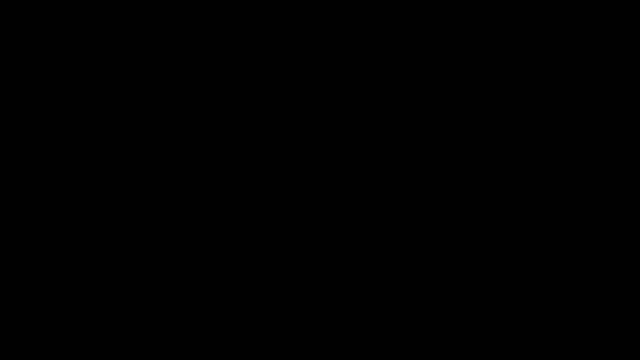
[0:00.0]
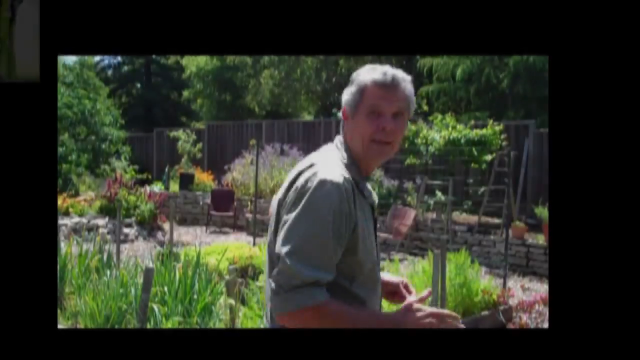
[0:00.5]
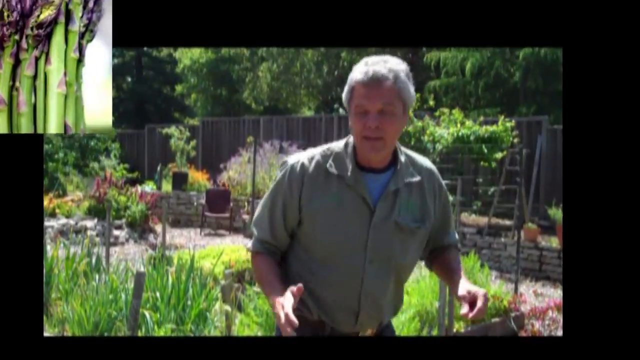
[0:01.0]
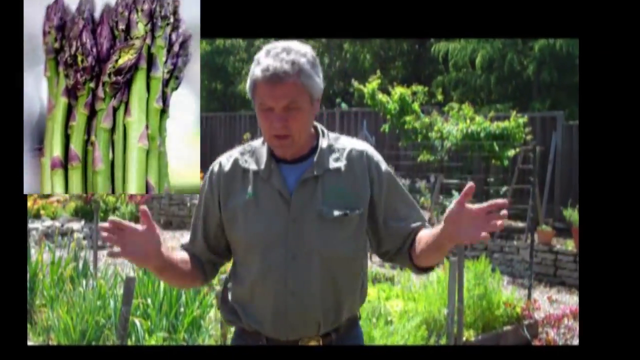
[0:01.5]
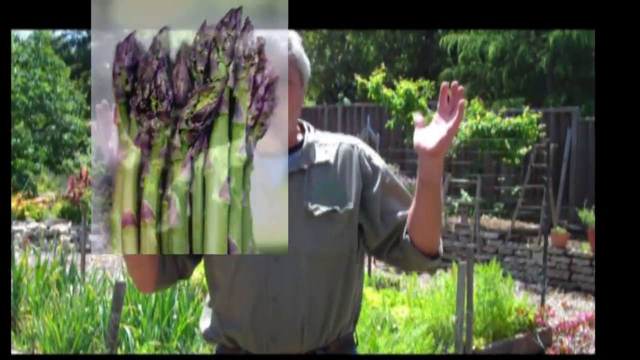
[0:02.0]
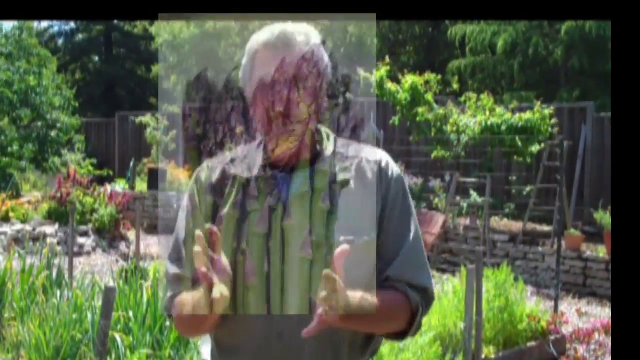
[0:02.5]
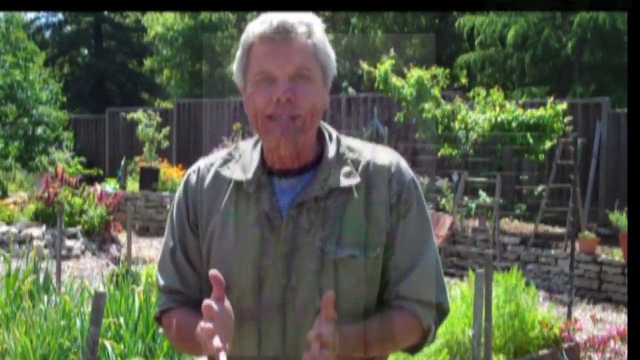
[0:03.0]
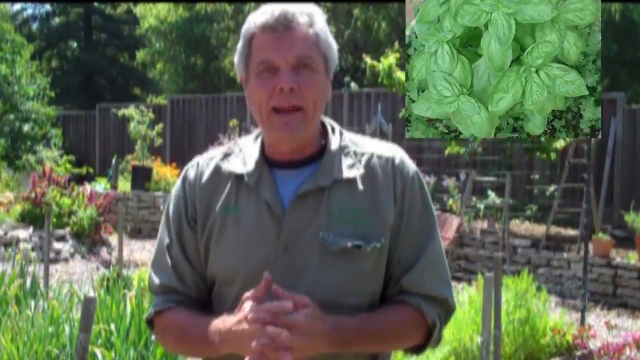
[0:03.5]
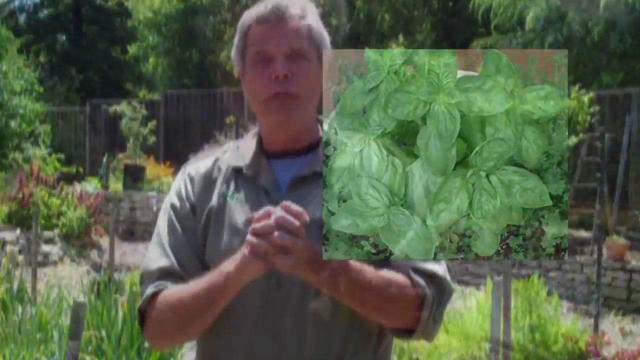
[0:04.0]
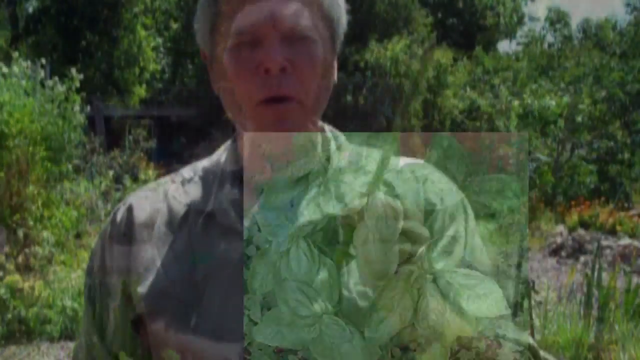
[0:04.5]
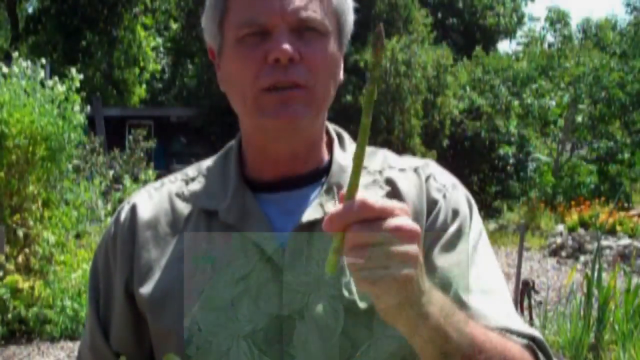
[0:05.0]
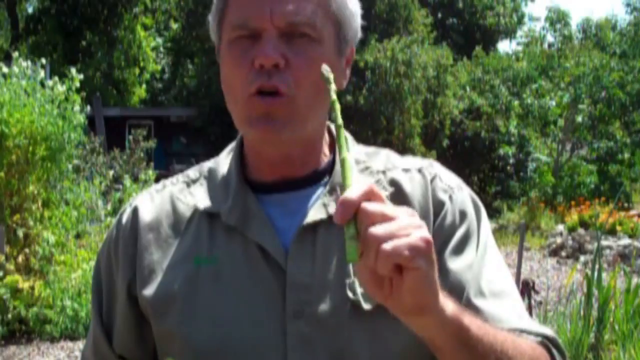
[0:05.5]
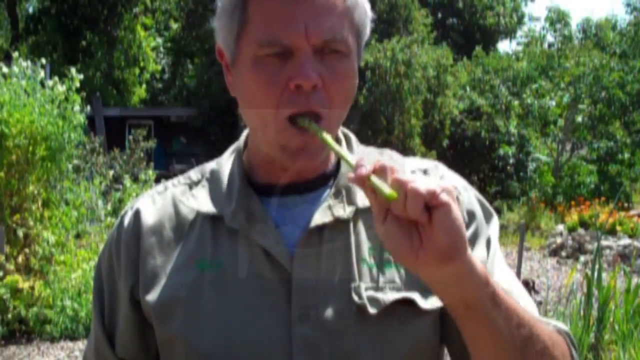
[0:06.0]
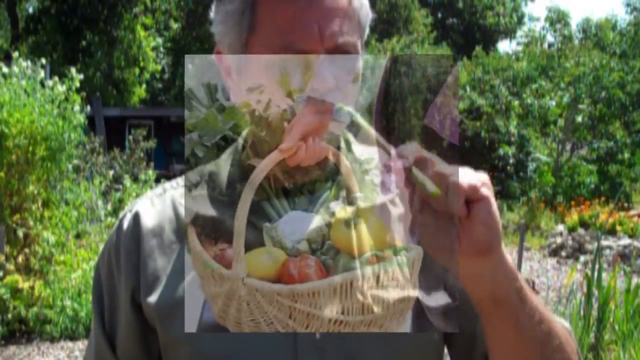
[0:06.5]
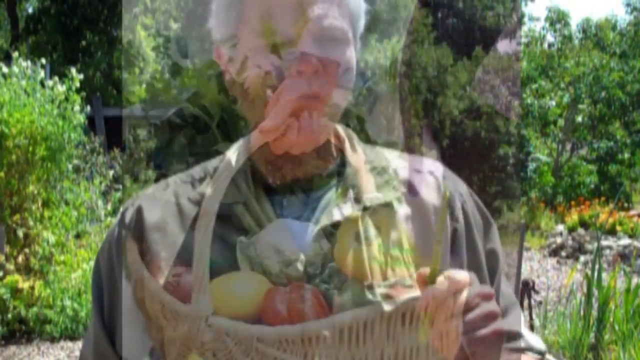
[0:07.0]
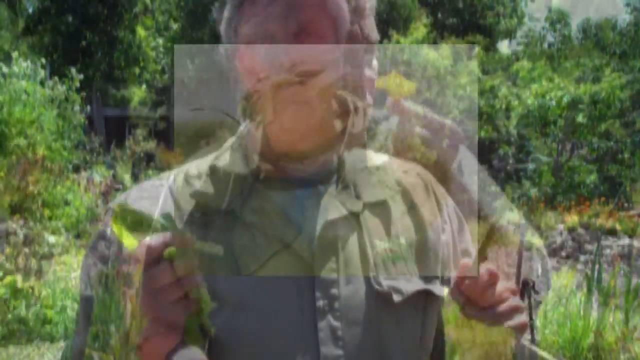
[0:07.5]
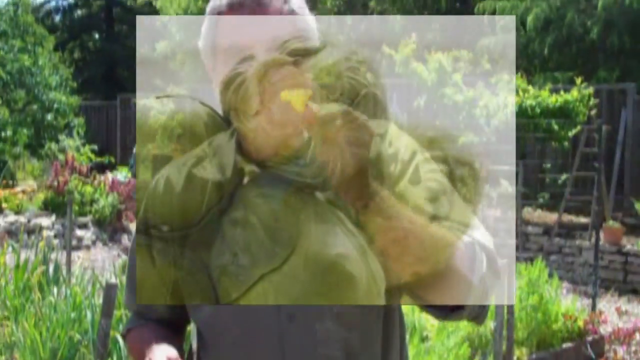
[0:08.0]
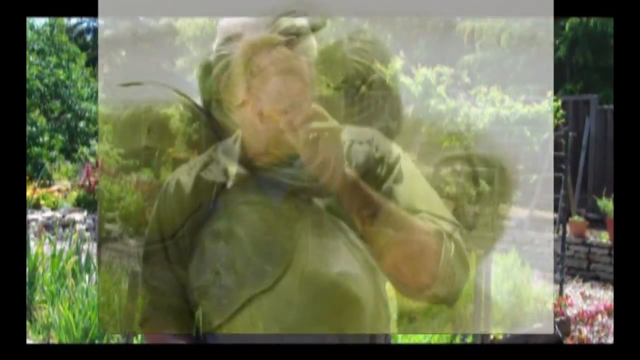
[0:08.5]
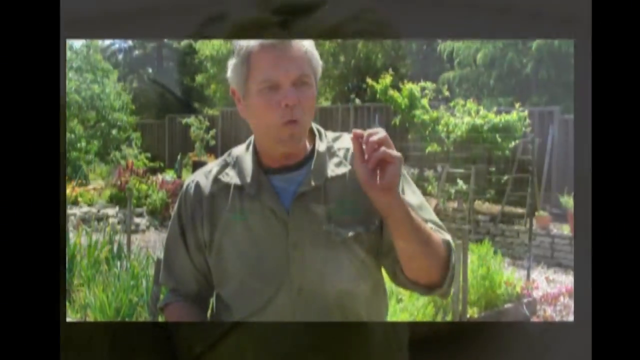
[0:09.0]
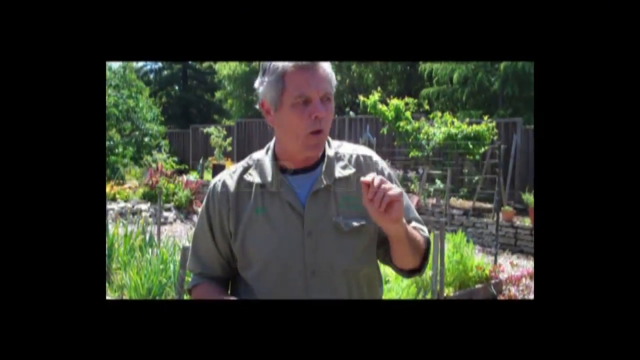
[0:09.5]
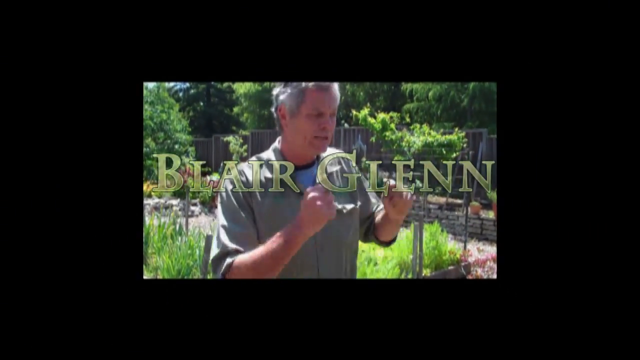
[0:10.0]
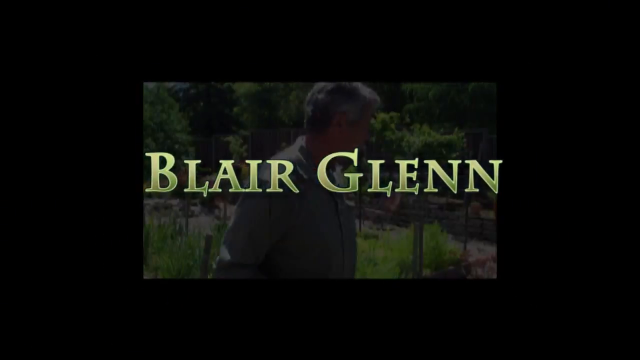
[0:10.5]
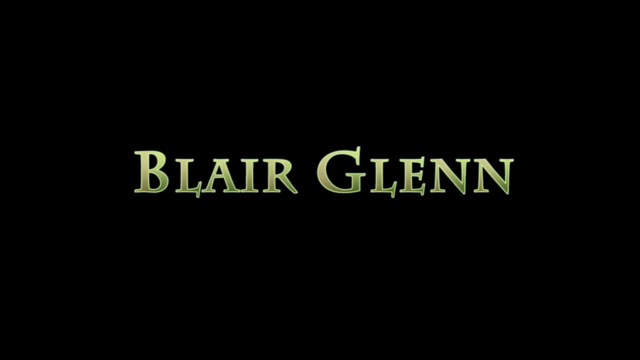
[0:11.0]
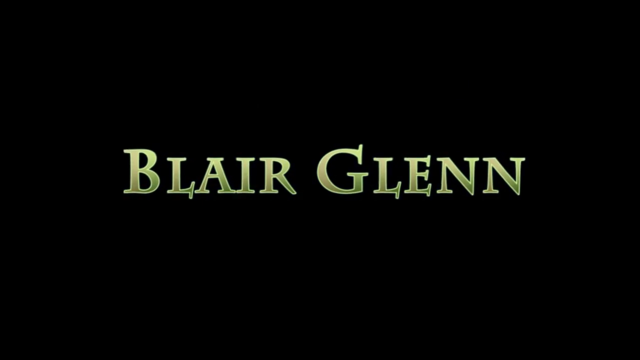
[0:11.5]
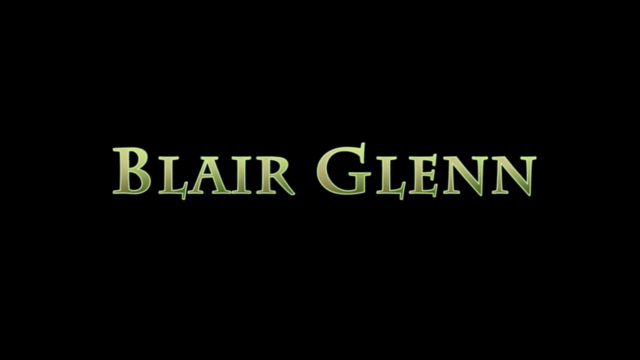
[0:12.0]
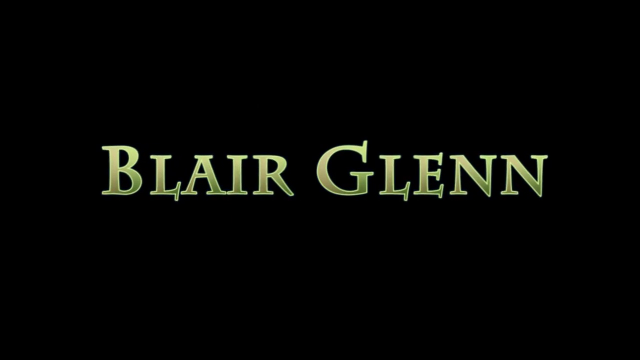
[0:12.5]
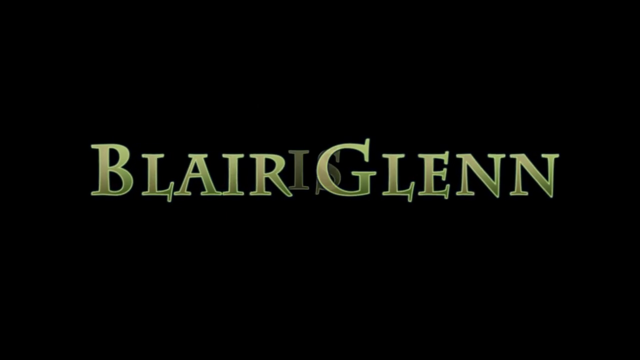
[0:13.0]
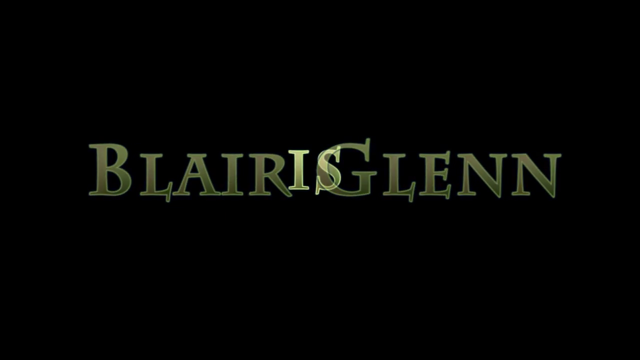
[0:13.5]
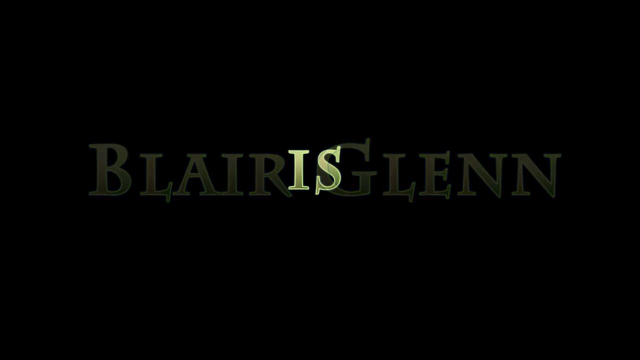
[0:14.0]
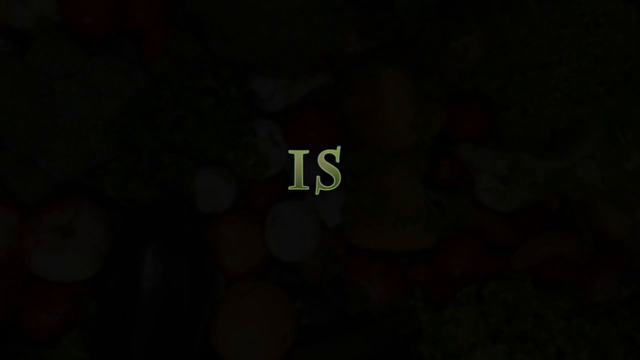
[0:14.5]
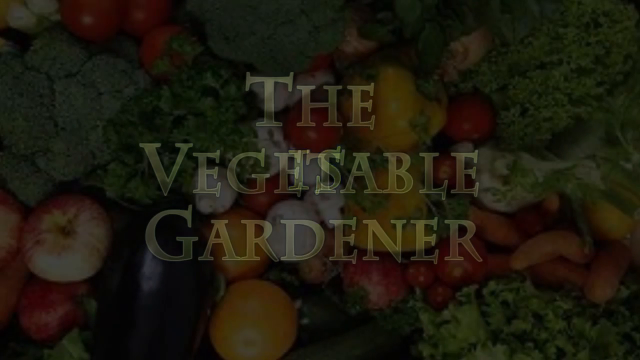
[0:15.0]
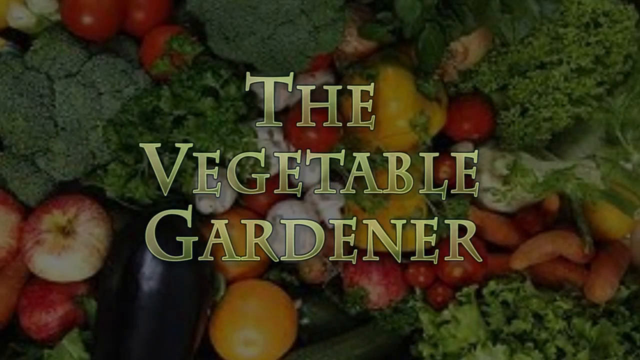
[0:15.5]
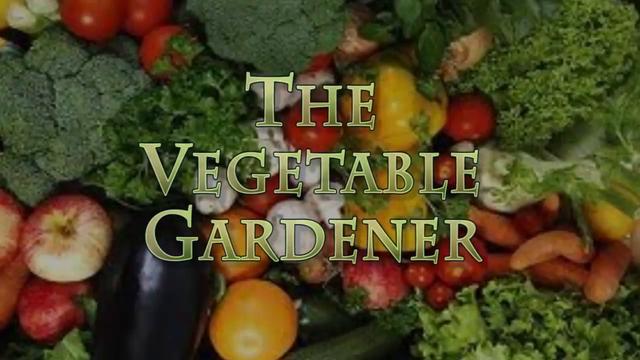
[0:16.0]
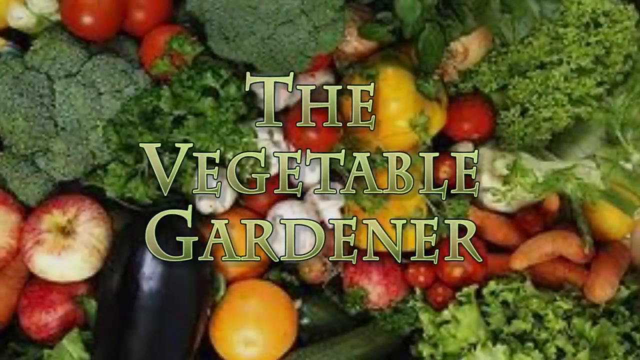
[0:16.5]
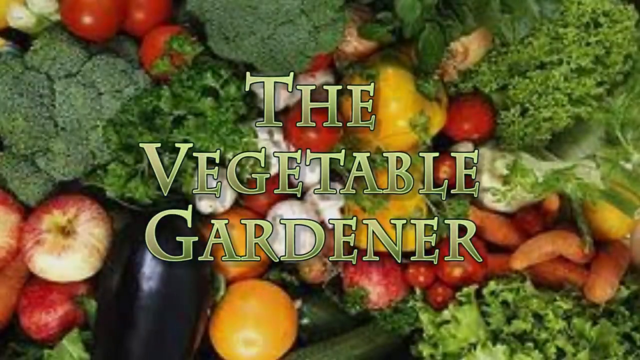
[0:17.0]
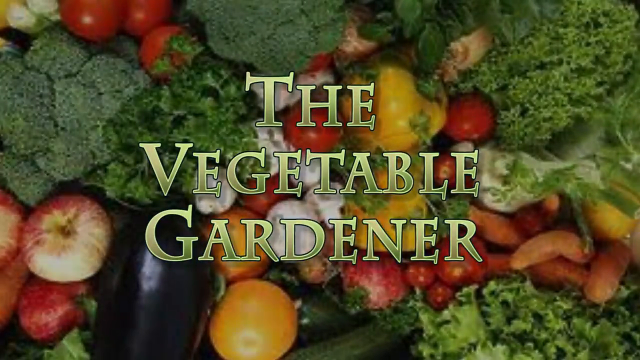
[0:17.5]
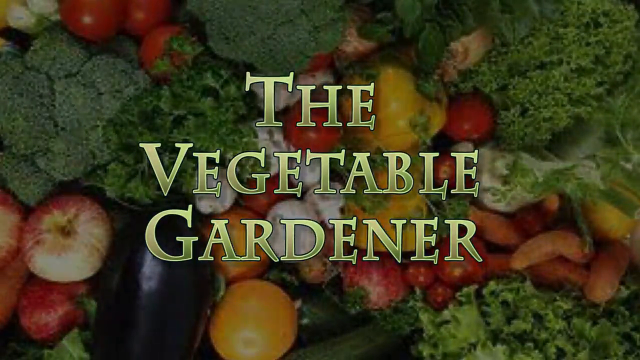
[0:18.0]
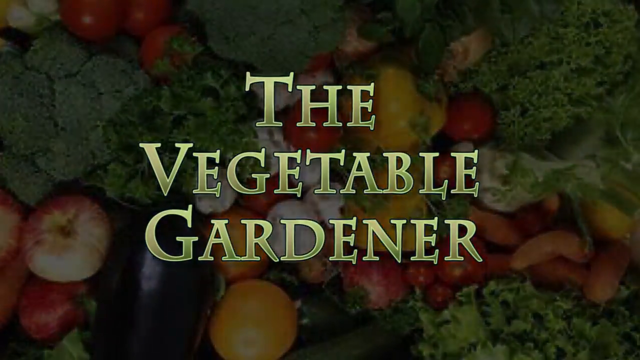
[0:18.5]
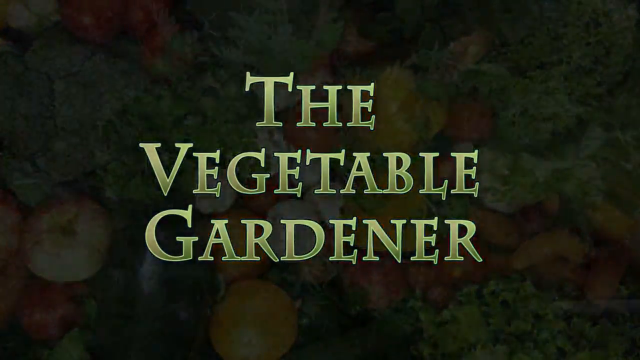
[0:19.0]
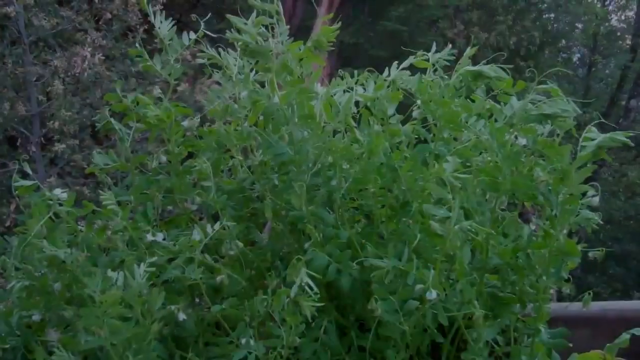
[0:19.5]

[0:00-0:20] A man who is not quite elderly but somewhat aging, with silver-white hair and a green collared shirt, stands in front of a garden on a sunny day. A picture of asparagus flashes over the screen as he talks to the camera, and another image of various vegetables drifts across the screen. He holds up a piece of asparagus and takes a bite out of it while an image of a basket full of fresh vegetables flashes across the screen, followed by an image of what appears to be various cabbages. Still chewing the asparagus, he turns to look at the garden behind him as the name "Blair Glen" flashes across the screen. The screen cuts to black for a brief moment, then "the vegetable gardener" appears superimposed in front of a bunch of fresh vegetables. The shot lingers on this title for a while before cutting to a bright green bush of some variety.